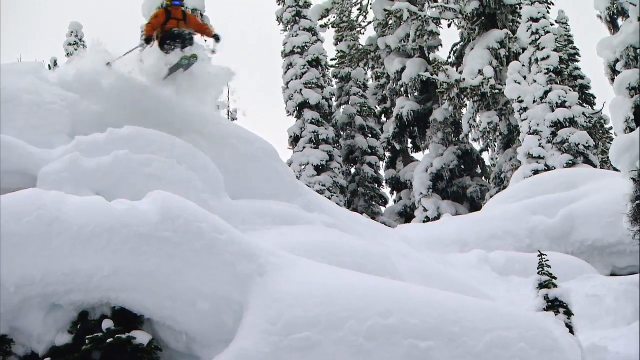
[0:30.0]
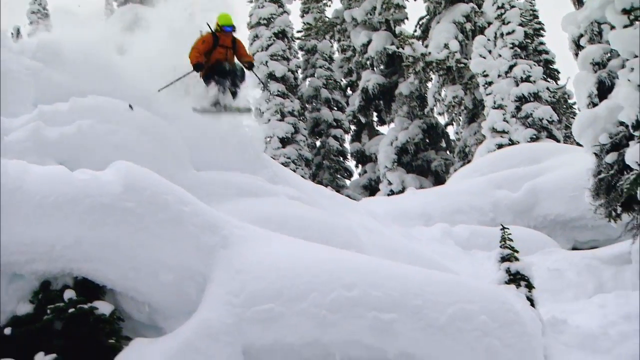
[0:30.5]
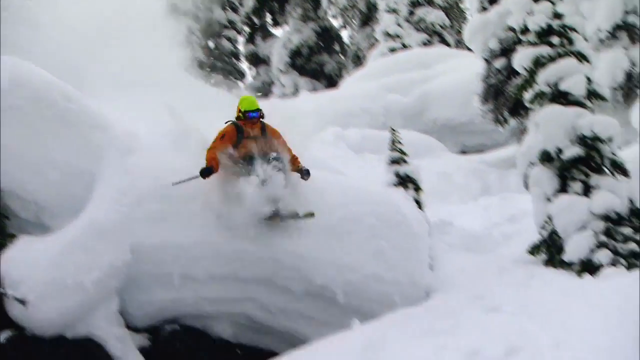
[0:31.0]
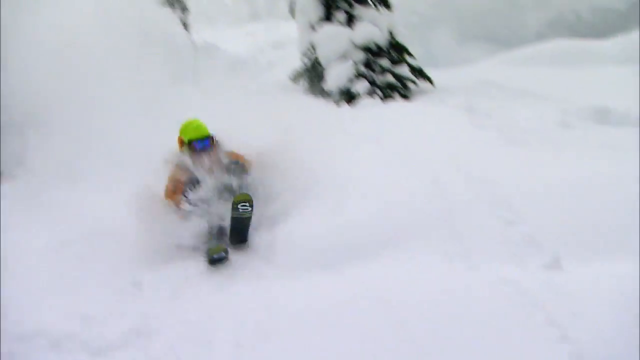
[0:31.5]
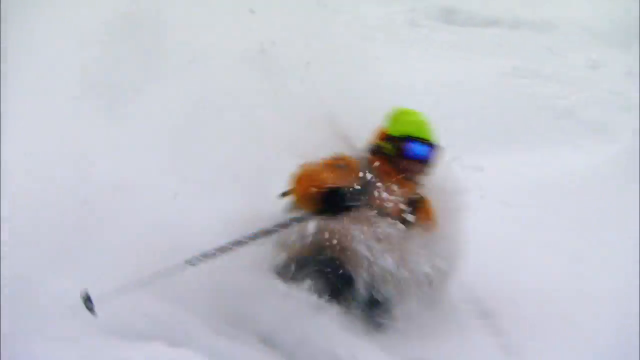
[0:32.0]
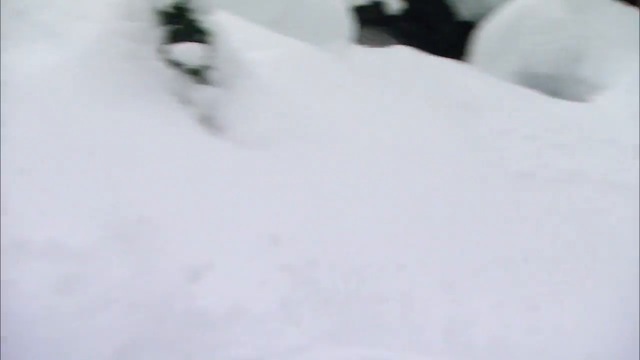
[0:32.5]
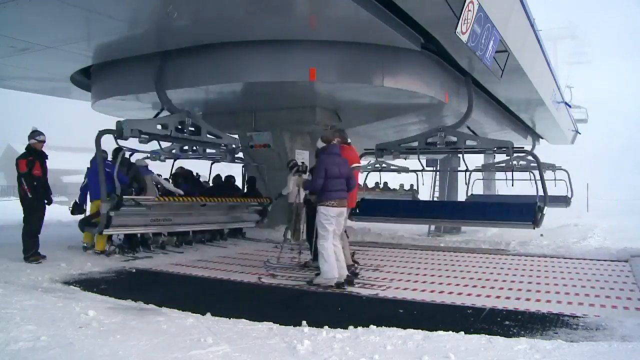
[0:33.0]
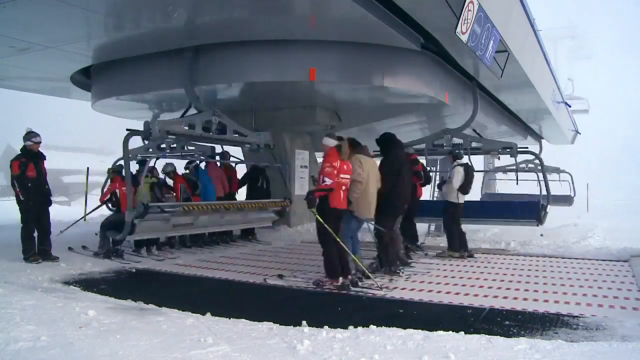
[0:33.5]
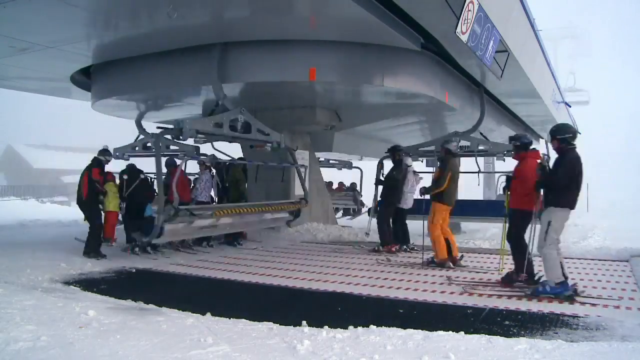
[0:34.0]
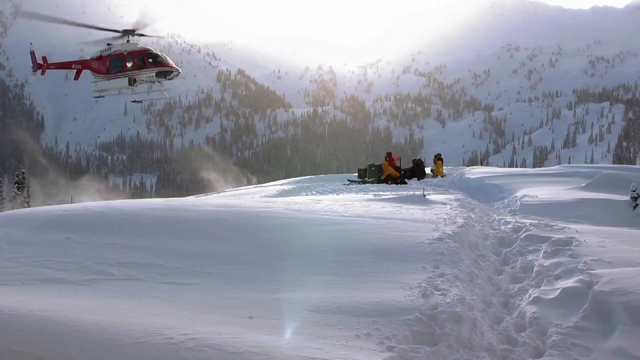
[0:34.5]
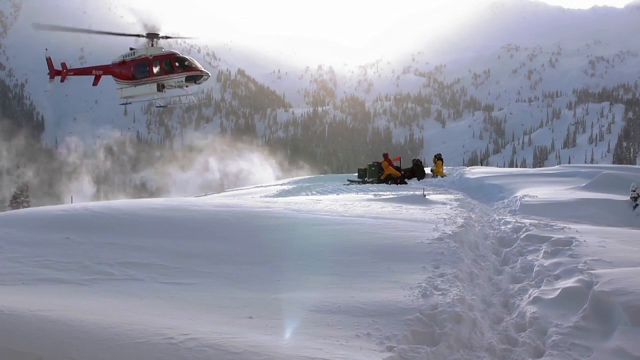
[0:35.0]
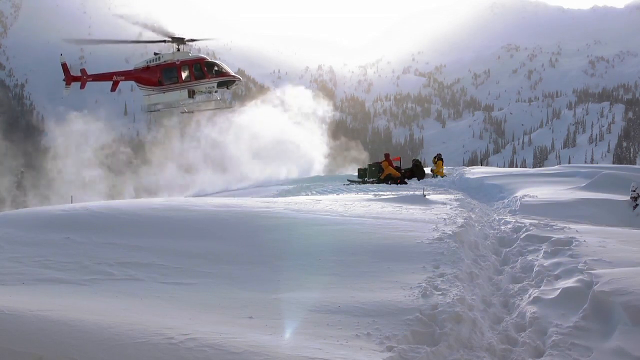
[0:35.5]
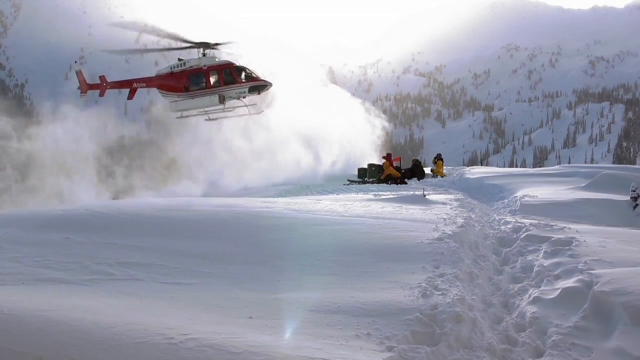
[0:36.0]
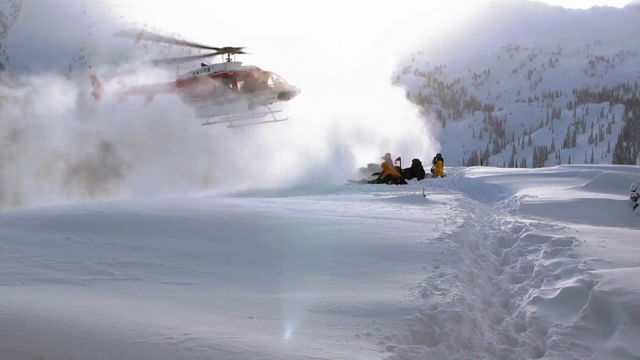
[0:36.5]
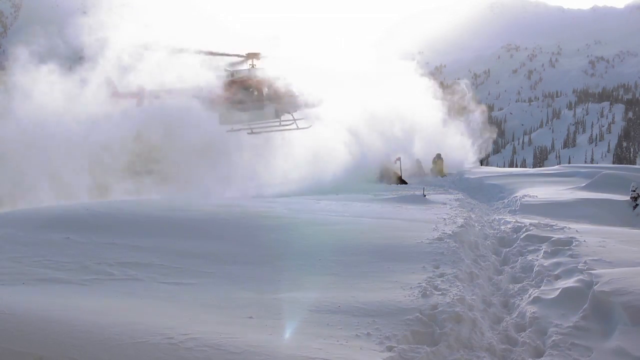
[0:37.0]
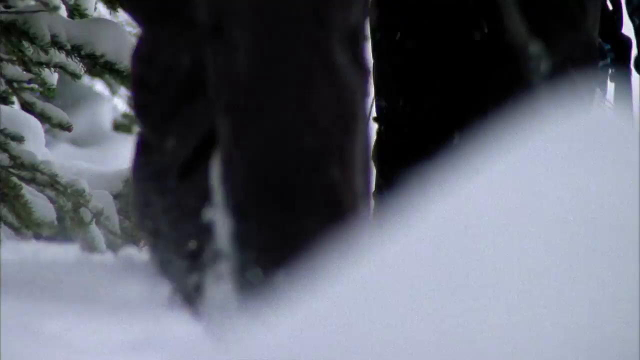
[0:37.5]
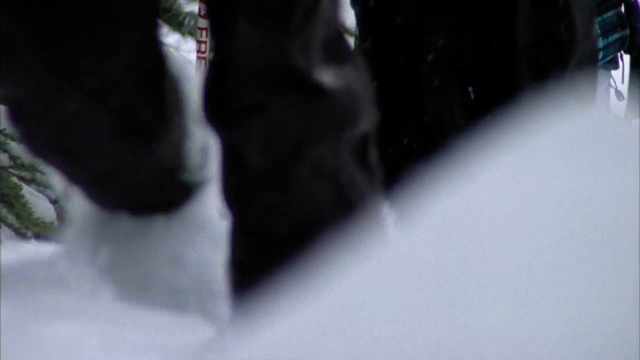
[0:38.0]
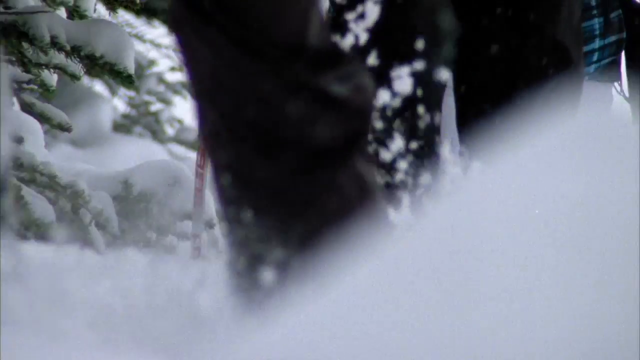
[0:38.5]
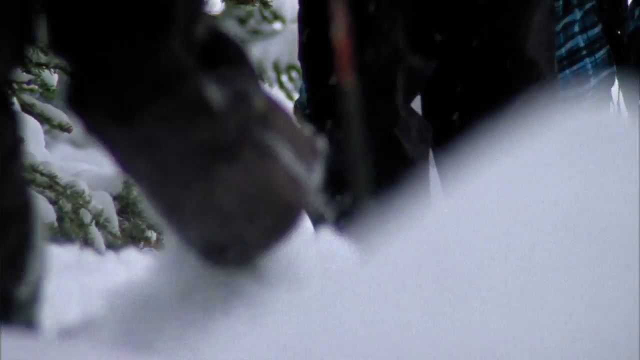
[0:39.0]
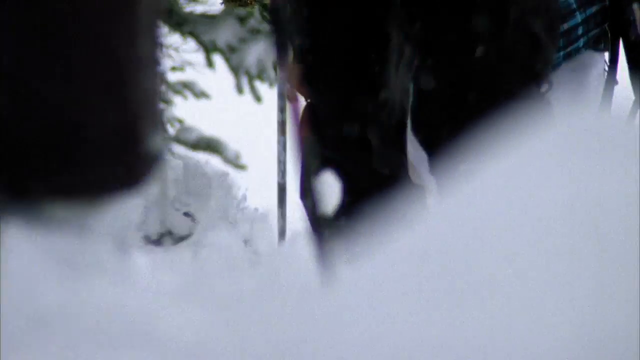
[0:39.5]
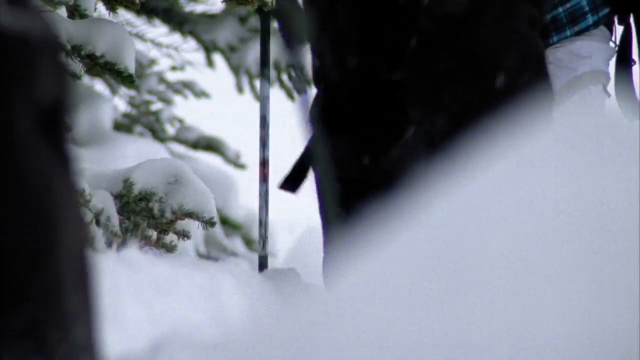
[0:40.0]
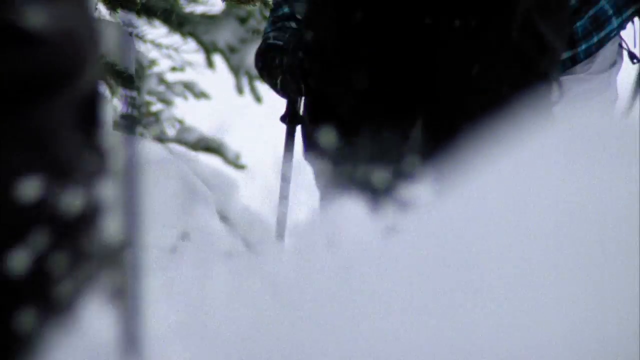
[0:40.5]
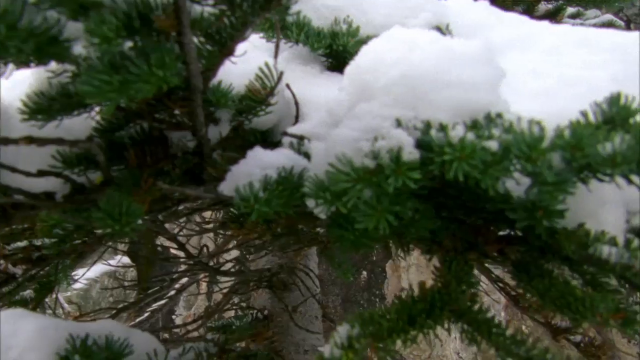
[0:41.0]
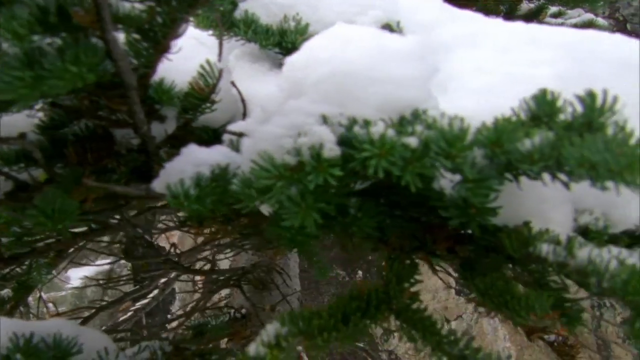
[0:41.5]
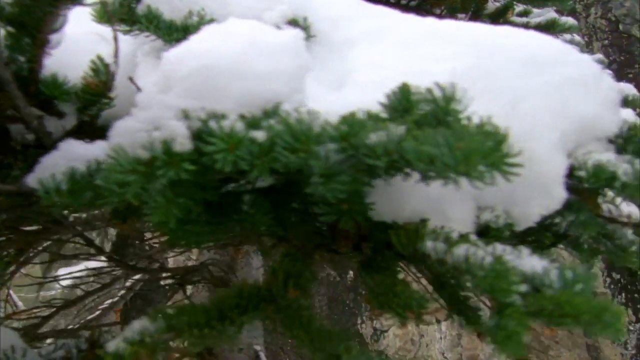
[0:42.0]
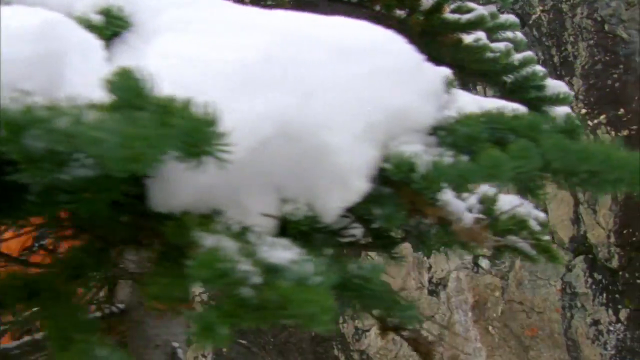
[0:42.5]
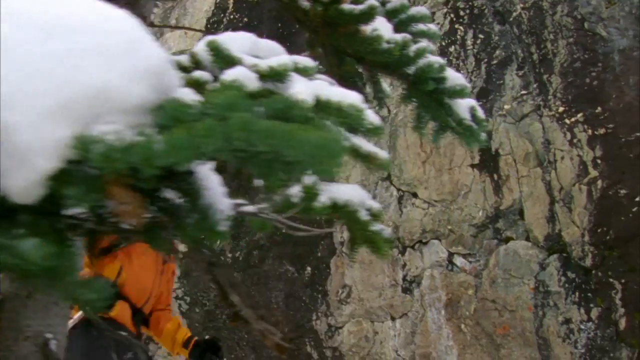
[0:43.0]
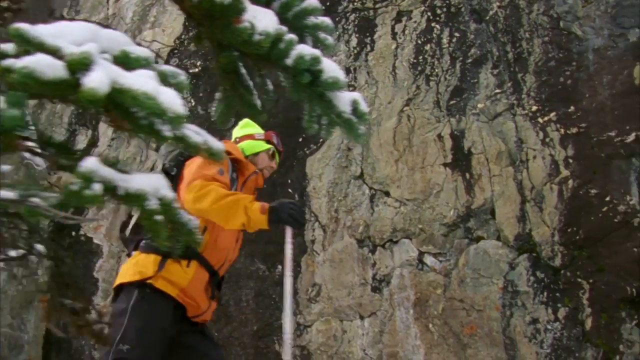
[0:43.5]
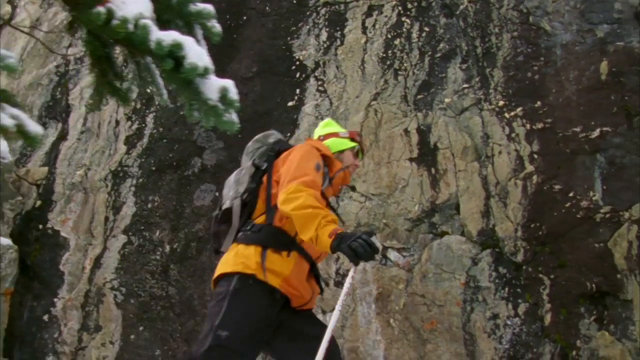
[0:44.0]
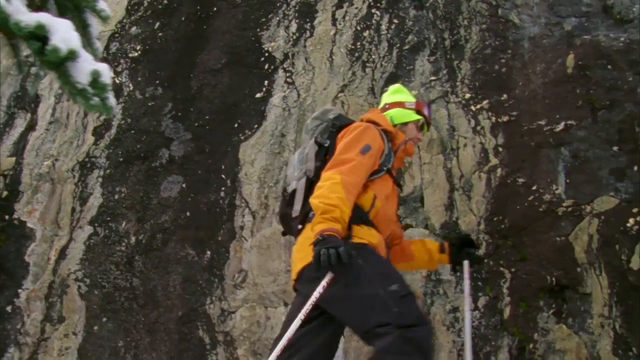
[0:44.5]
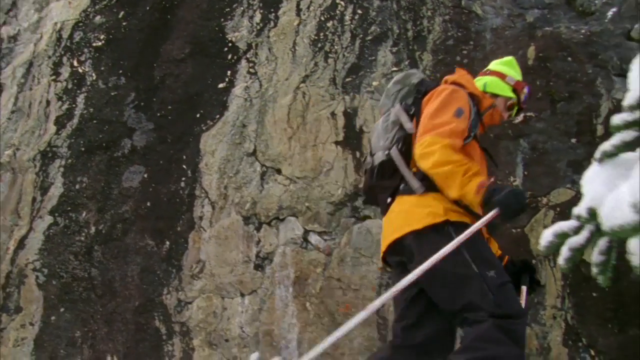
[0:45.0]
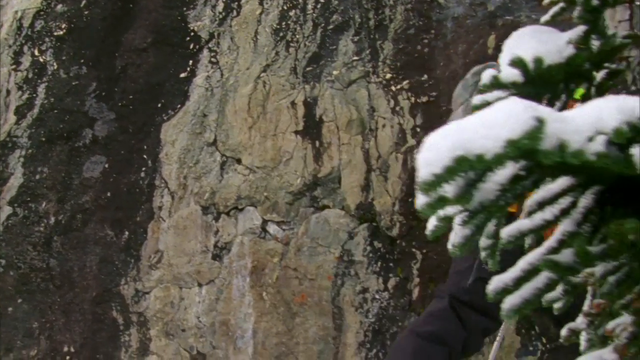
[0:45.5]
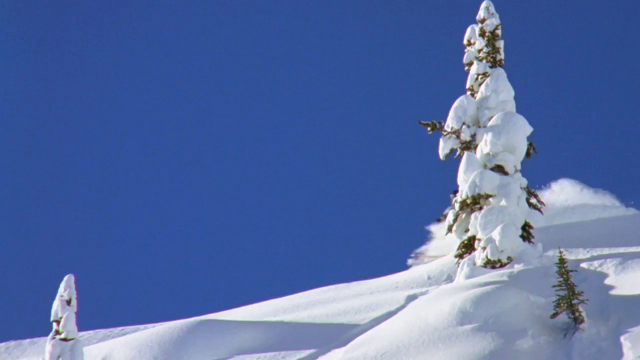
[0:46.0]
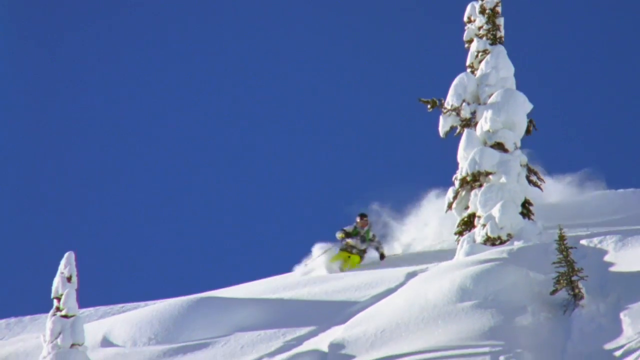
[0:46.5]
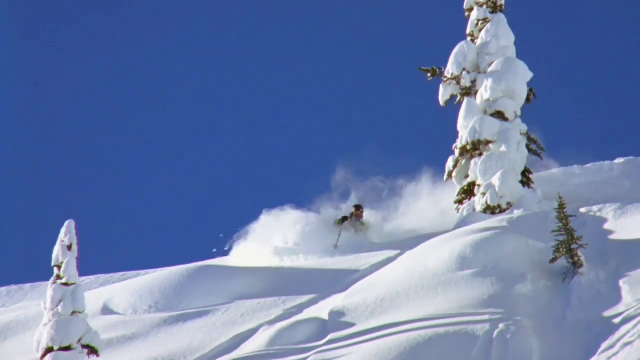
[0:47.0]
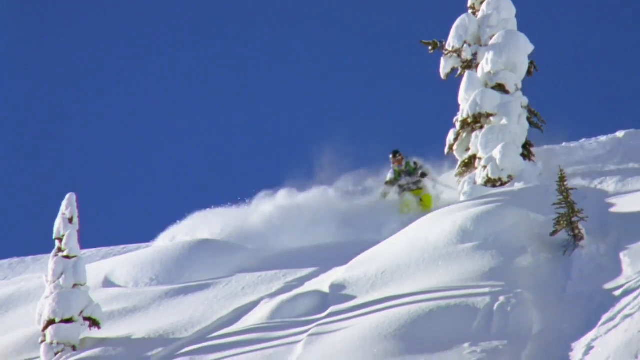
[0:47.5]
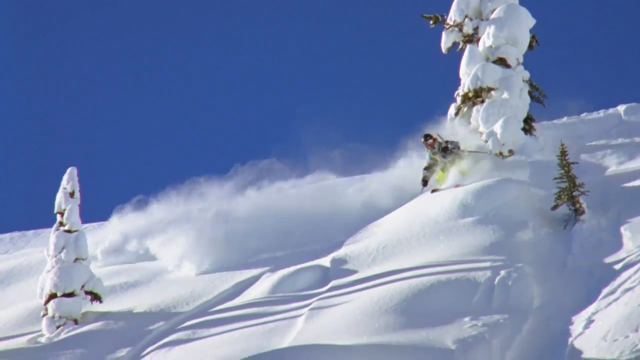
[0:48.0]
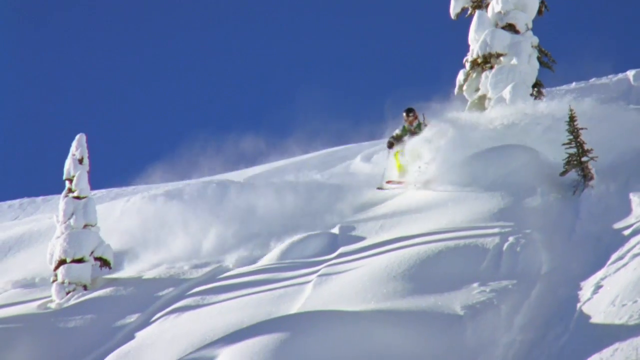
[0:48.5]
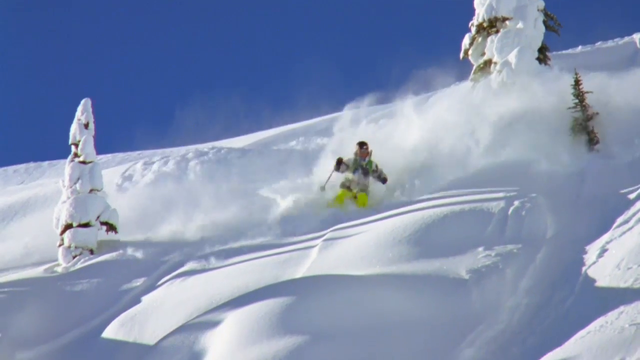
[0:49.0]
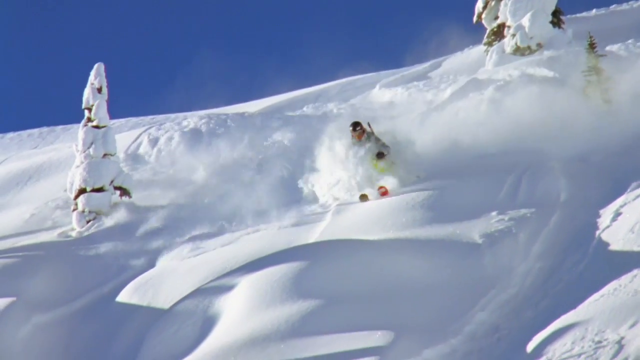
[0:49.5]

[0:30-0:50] A skier in a blue jacket and a blue visor jumps off a cliff from left to right. As they land they hit a pile of snow, go past it, hit the ground and take a left turn. The next shot shows the ski lift in sped-up motion, with people getting on it. Then a red helicopter approaches from the top left and lands next to what looks like a couple of people sitting on the ground. Next, an up-close shot of just the legs and feet of some people walking in the snow, somewhat toward the camera but to the left, using ski sticks to help them walk. Then comes an up-close shot of a pine tree with some snow on it as the camera moves from left to right; behind the tree, someone in an orange jacket and a neon green beanie walks with a ski stick in each hand. Next, someone in neon green pants skis downhill toward the camera, going to the right, then stops themselves by moving their skis to the left, which turns them to the left; they then do the same thing pointing to the right and go to the right, and keep repeating this.